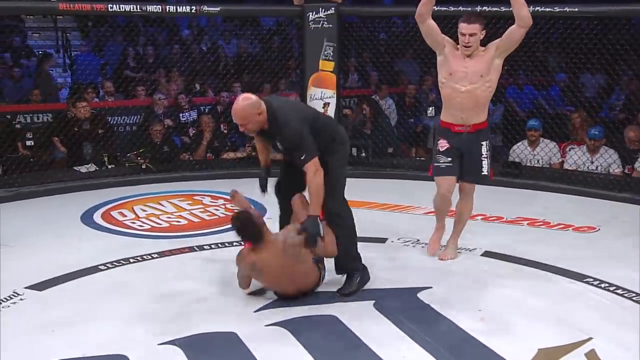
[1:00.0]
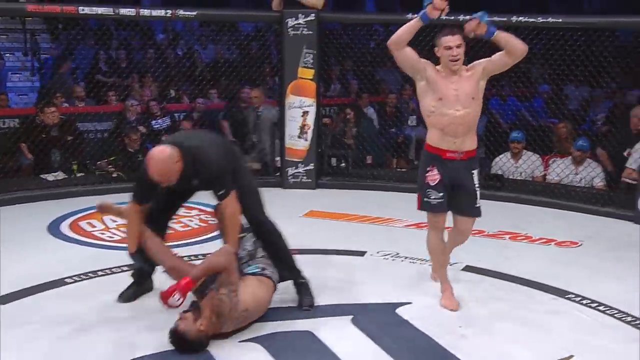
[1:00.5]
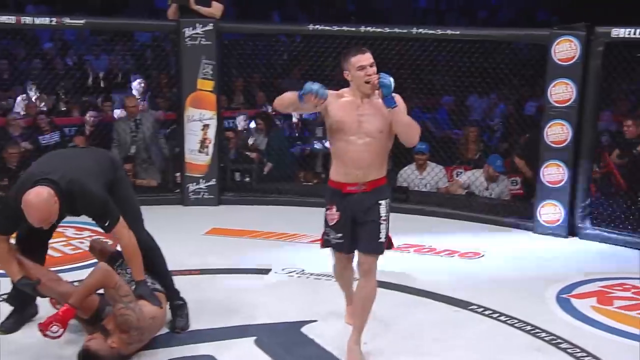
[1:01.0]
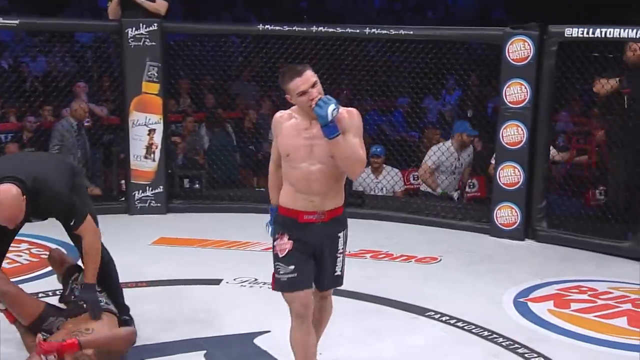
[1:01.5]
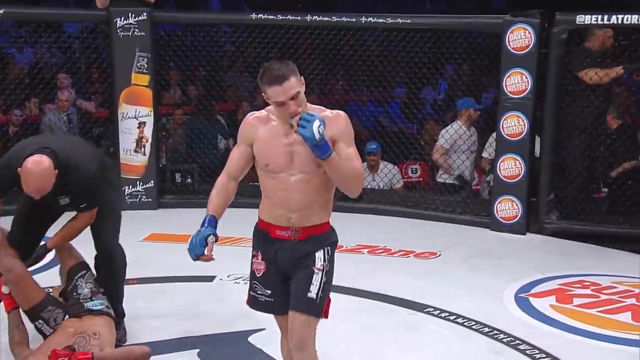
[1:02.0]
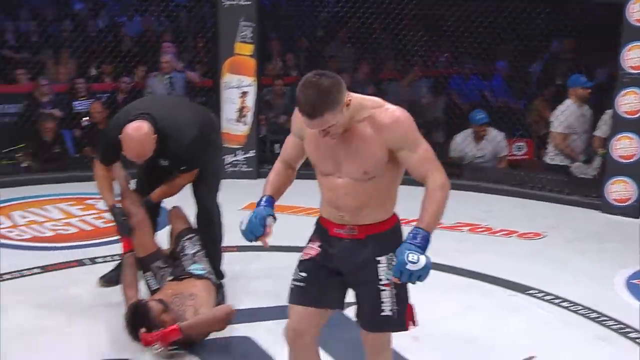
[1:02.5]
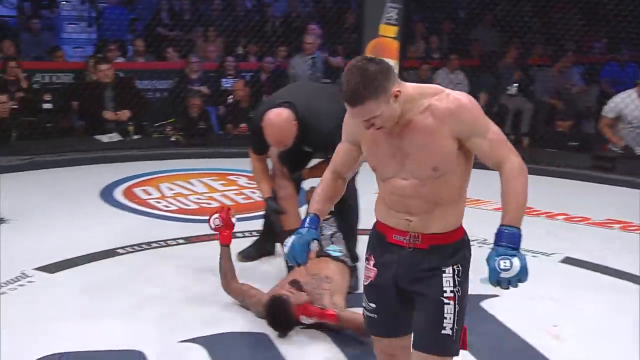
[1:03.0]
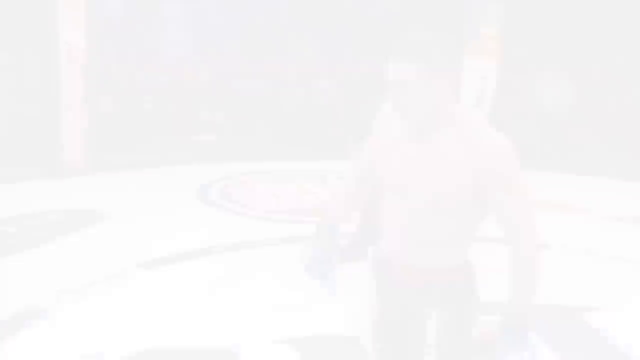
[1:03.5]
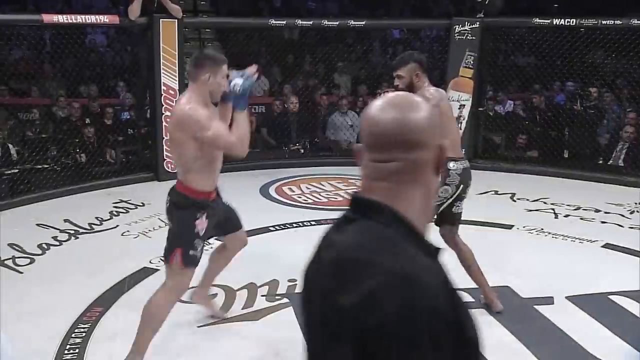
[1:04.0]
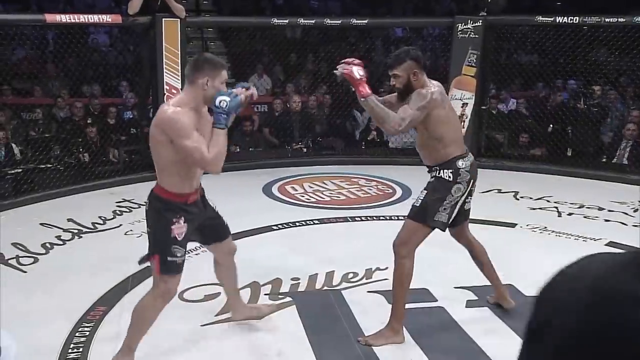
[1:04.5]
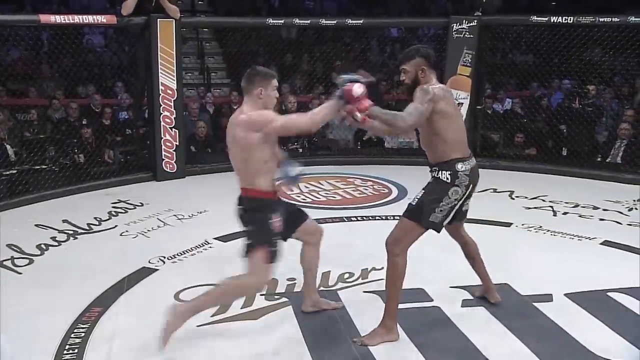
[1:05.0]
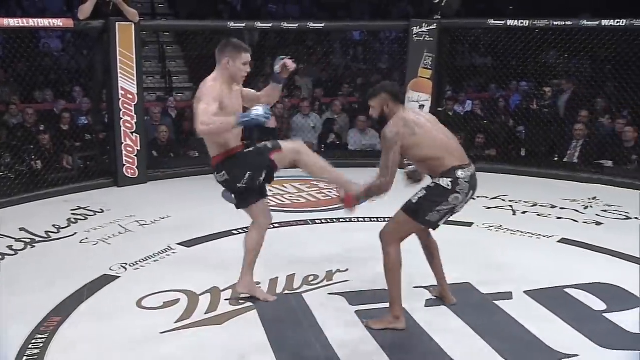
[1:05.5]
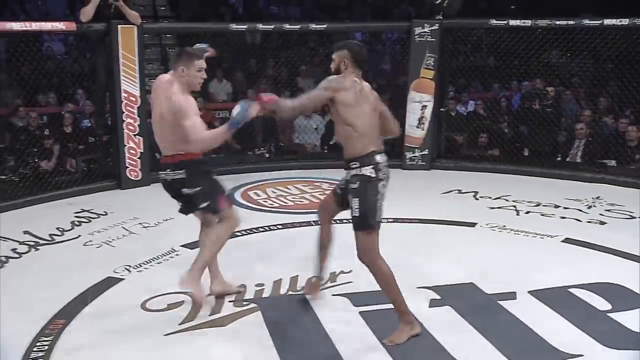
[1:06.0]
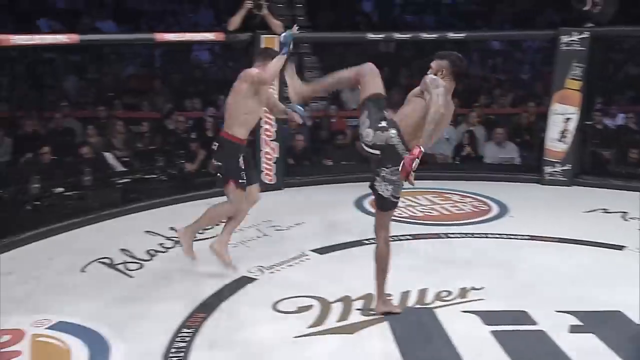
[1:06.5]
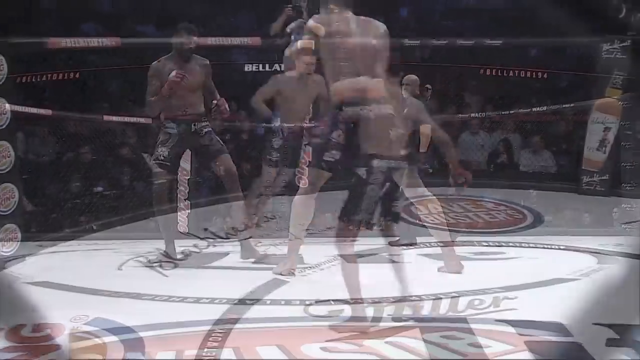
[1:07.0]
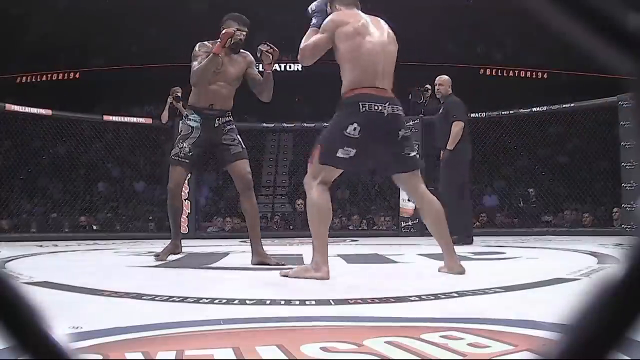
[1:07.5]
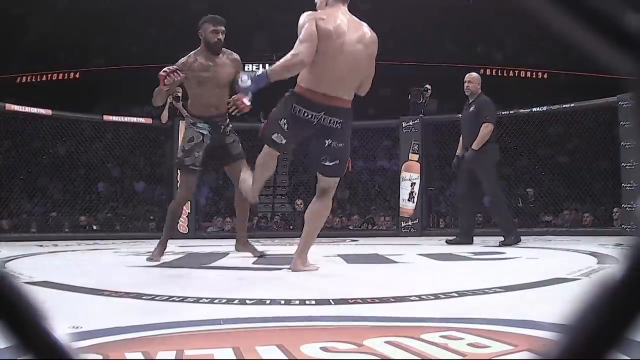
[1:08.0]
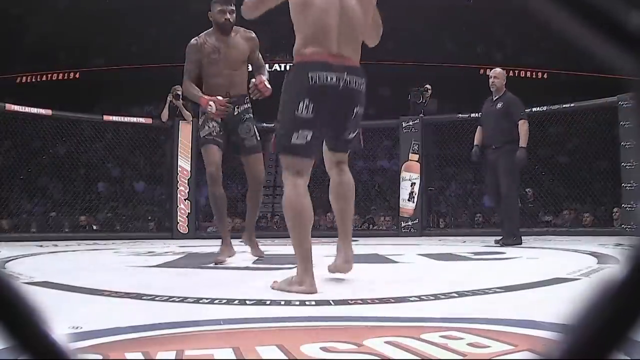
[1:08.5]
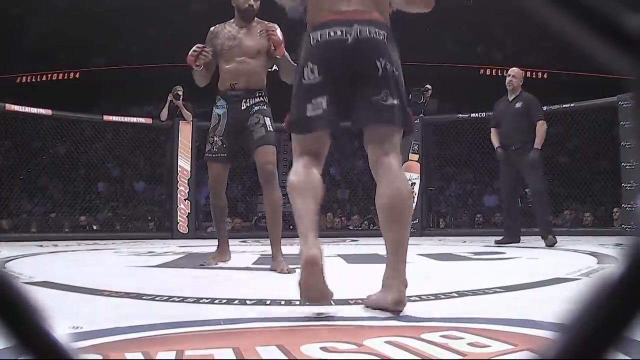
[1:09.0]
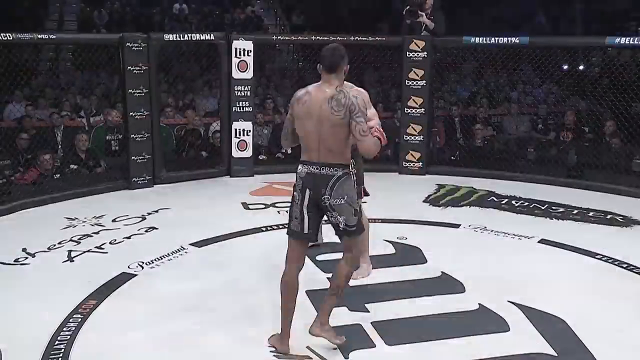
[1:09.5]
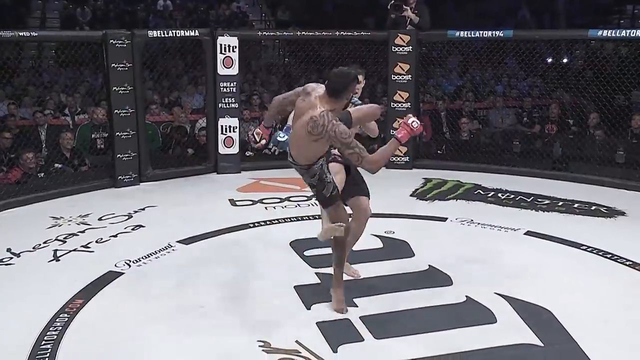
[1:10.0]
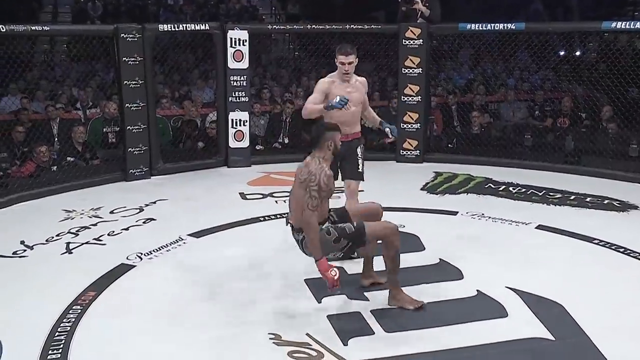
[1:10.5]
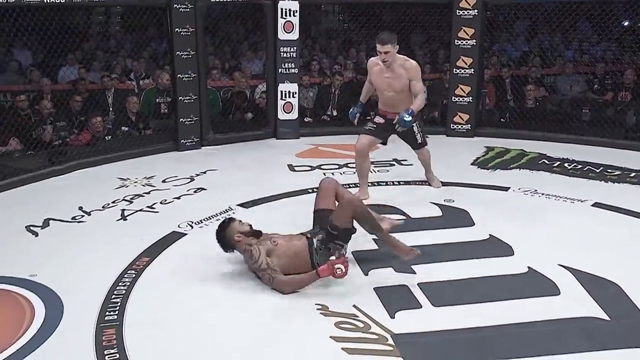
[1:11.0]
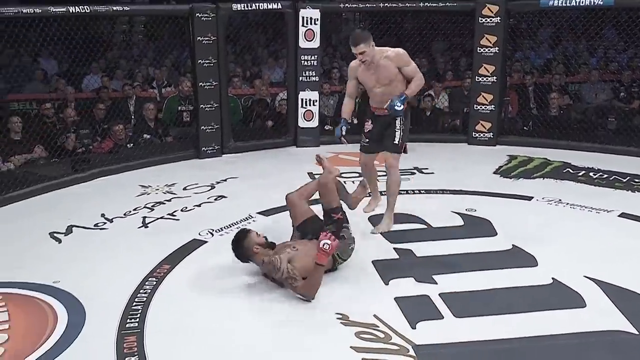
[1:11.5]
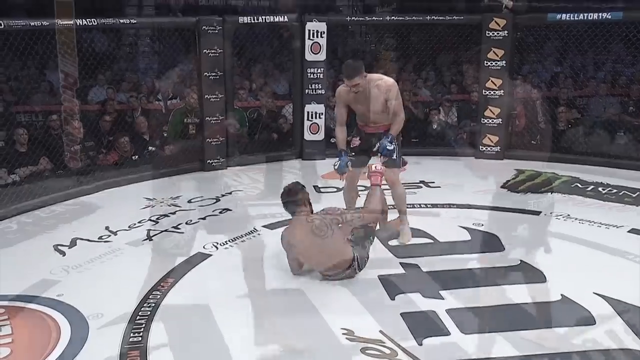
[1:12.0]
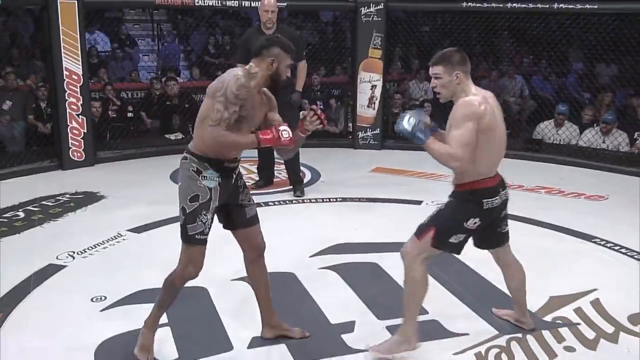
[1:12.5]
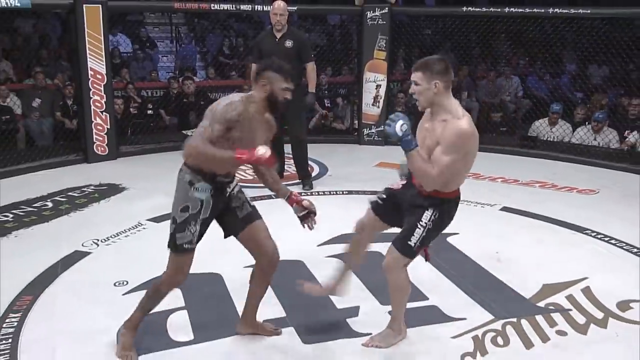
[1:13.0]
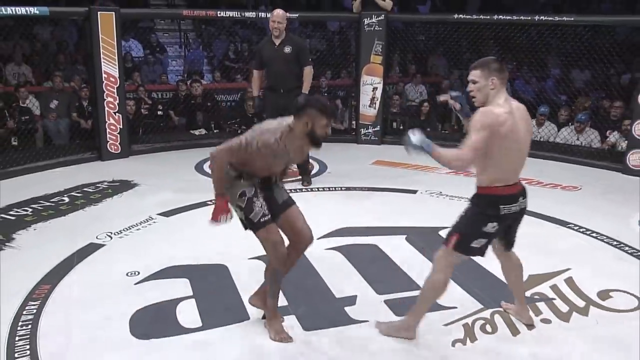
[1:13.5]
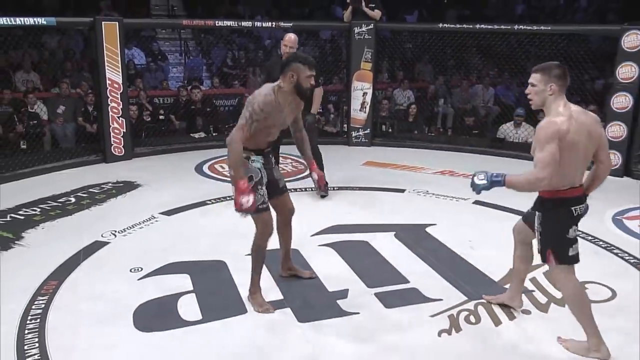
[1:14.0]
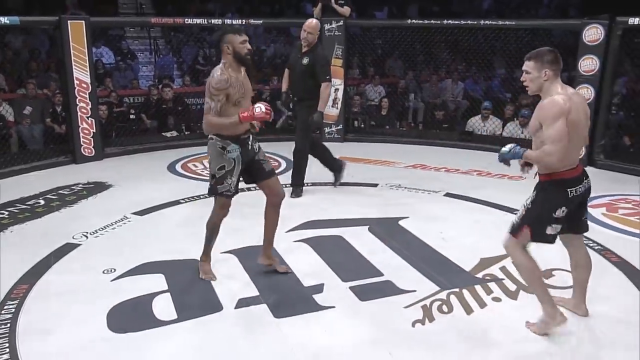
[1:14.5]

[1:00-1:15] The referee checks McGeary's knee as he is on the ground. The video then shows other parts of the fight: McGeary blocks kicks, throws a kick at the other fighter, gets kicked a couple more times, is knocked down and gets back up. He is kicked in the same knee about four or five times.